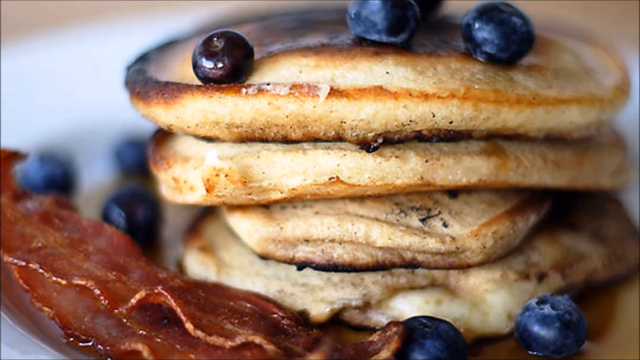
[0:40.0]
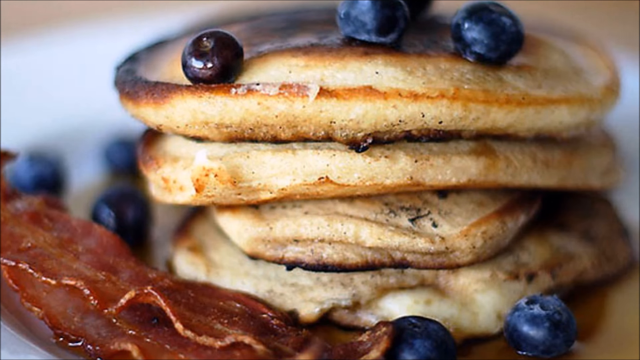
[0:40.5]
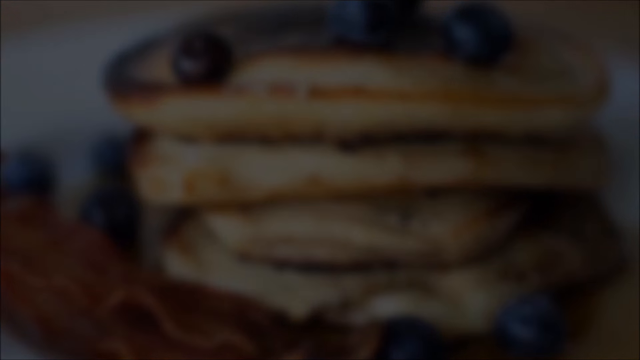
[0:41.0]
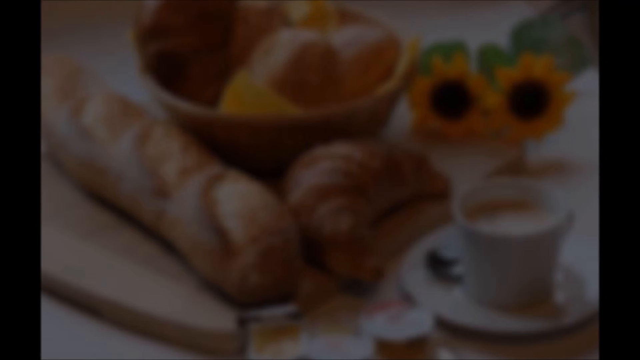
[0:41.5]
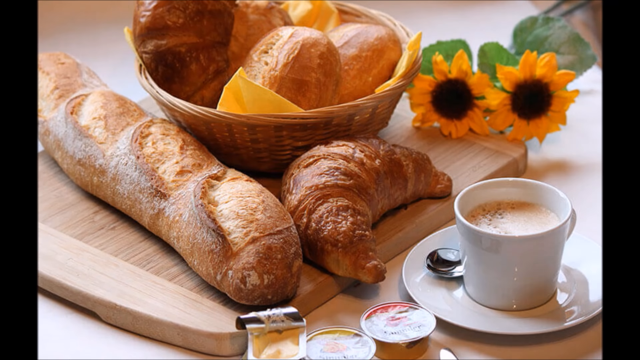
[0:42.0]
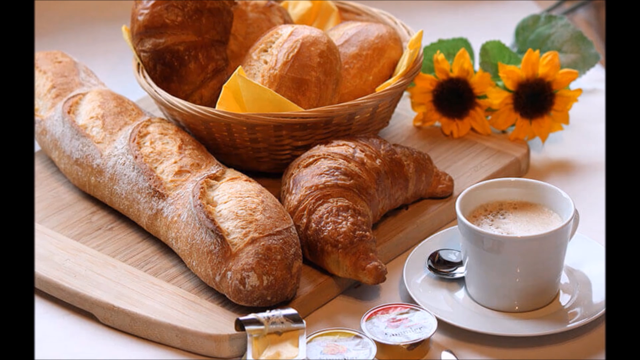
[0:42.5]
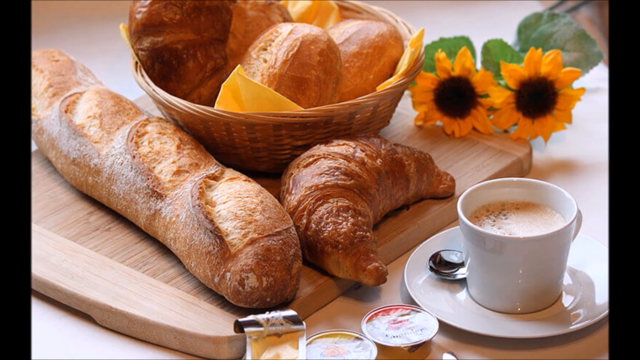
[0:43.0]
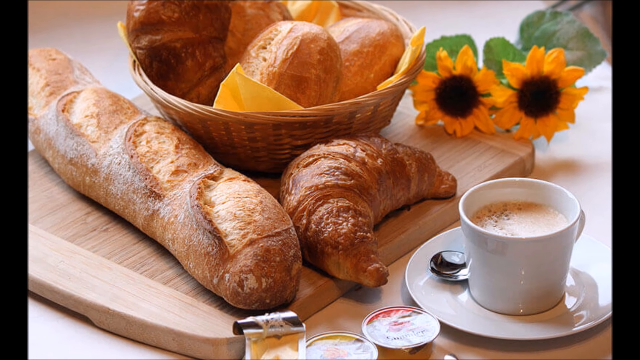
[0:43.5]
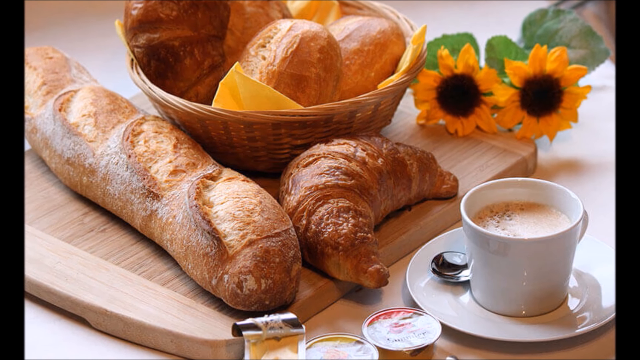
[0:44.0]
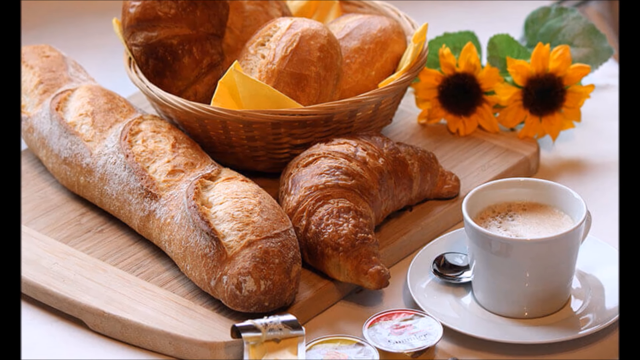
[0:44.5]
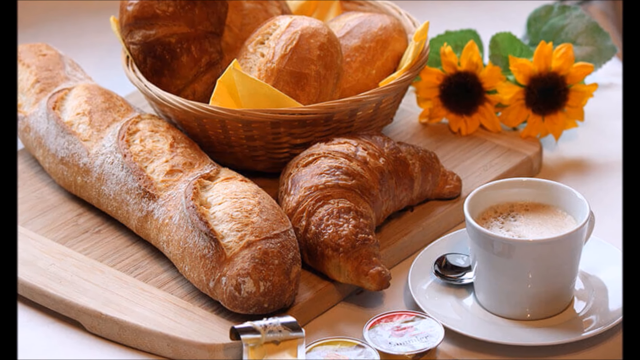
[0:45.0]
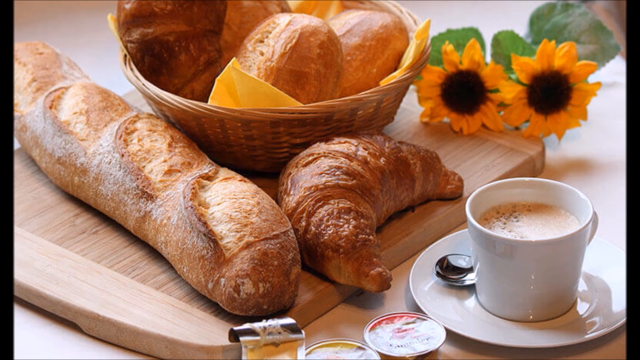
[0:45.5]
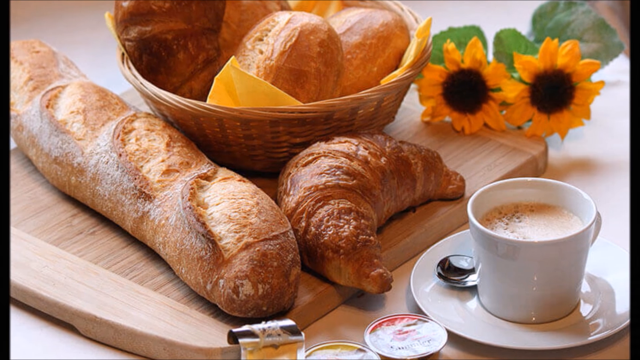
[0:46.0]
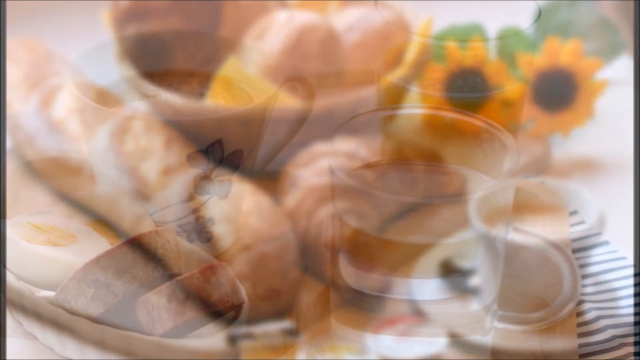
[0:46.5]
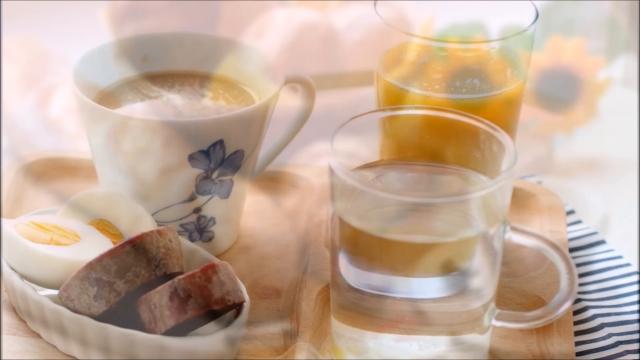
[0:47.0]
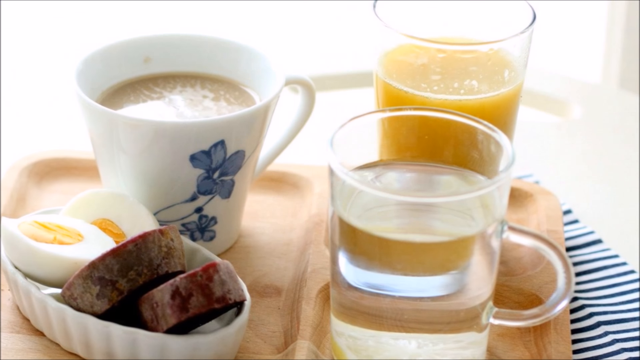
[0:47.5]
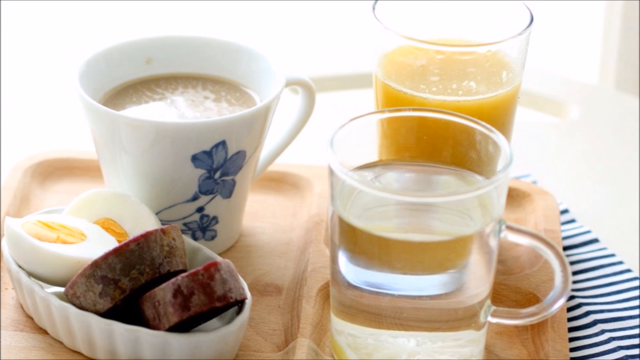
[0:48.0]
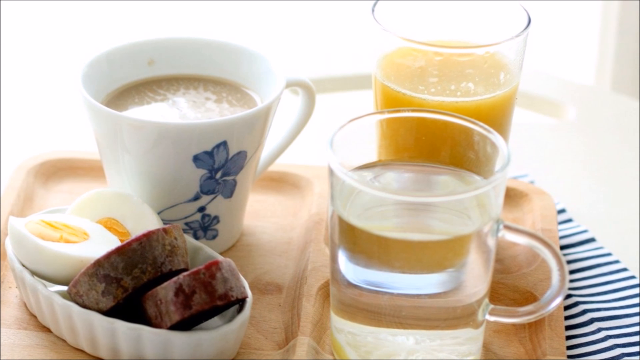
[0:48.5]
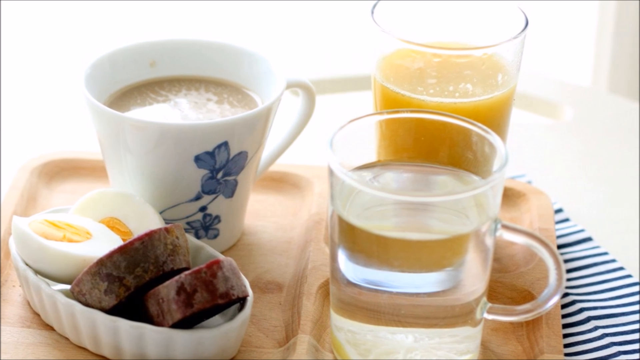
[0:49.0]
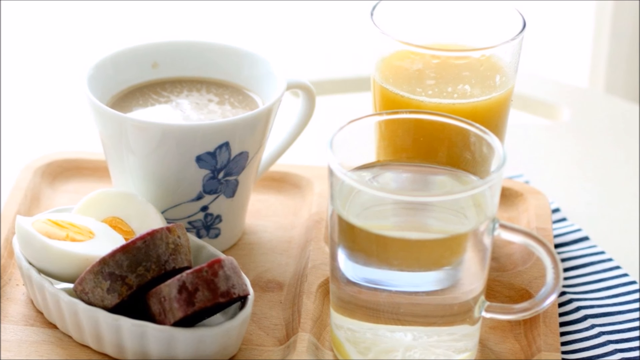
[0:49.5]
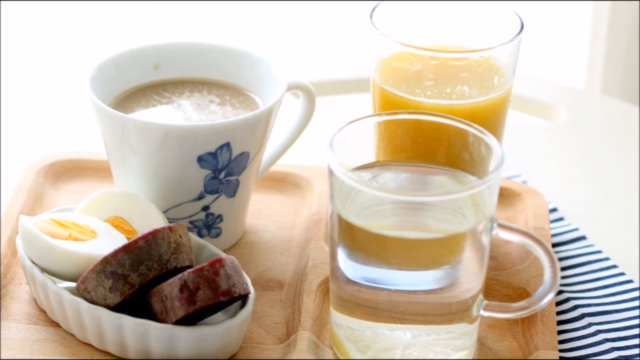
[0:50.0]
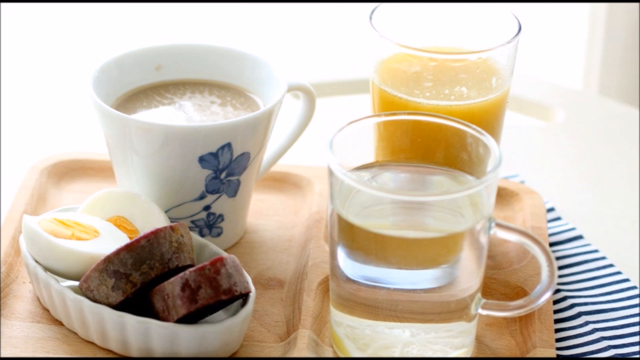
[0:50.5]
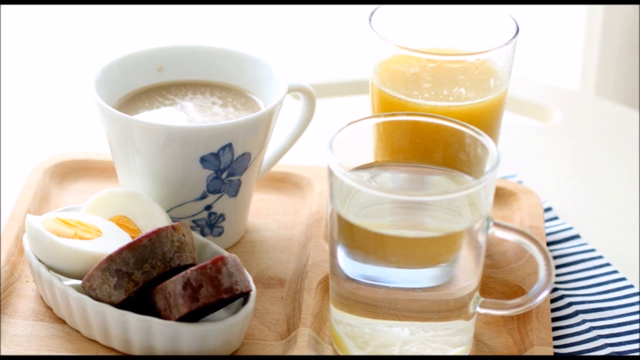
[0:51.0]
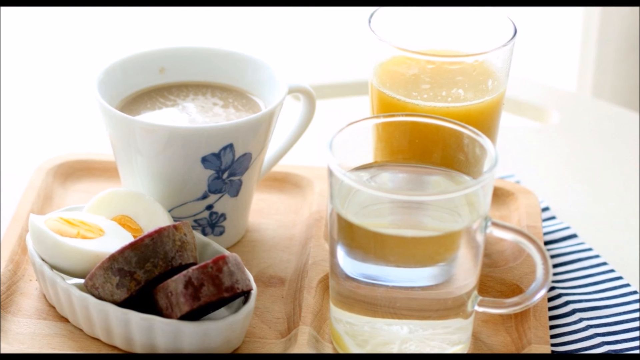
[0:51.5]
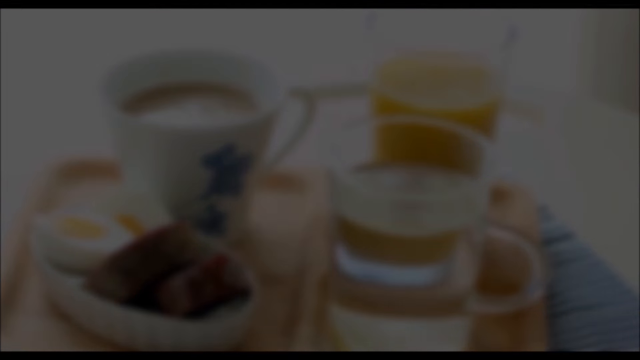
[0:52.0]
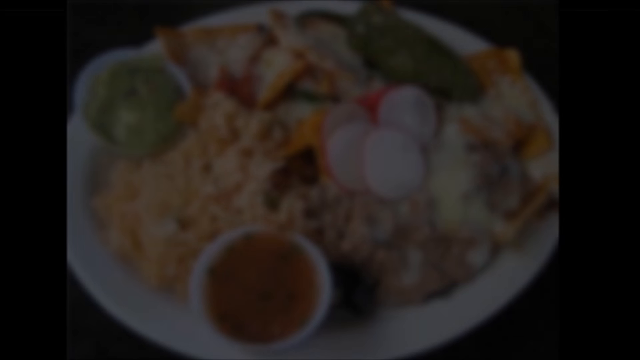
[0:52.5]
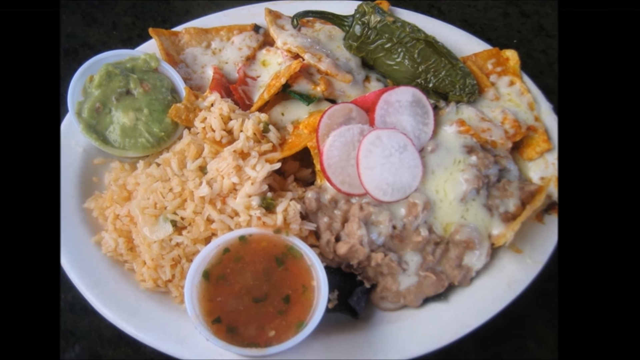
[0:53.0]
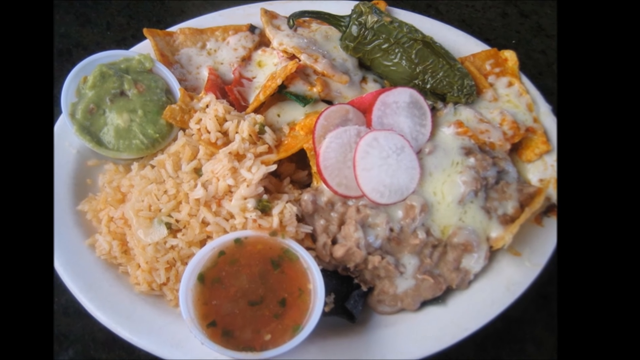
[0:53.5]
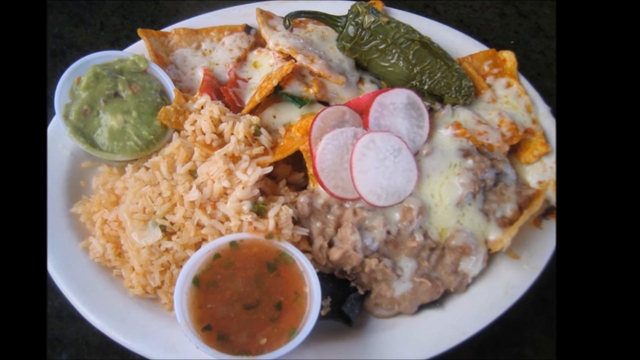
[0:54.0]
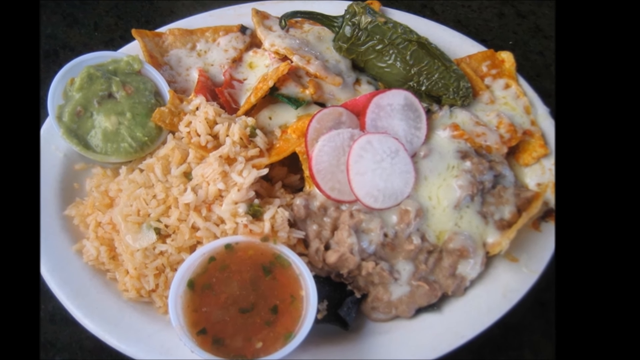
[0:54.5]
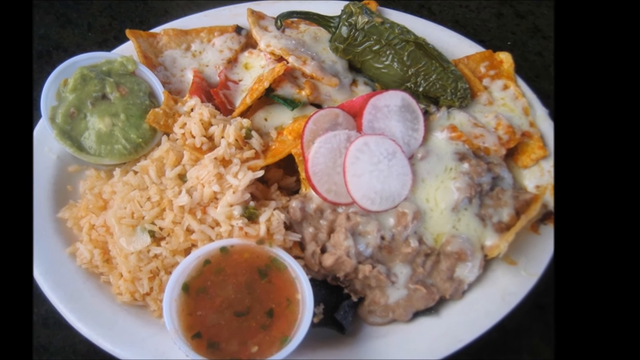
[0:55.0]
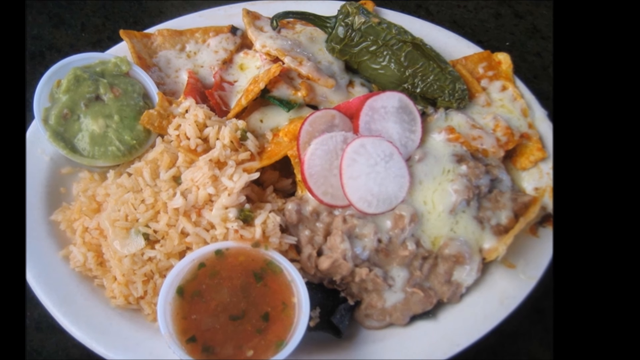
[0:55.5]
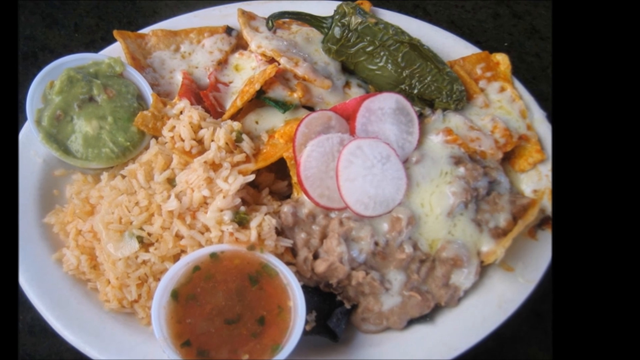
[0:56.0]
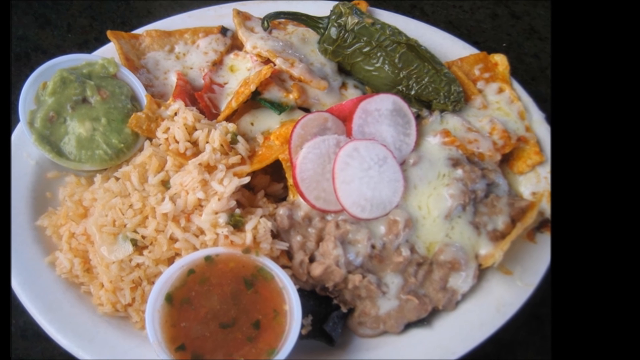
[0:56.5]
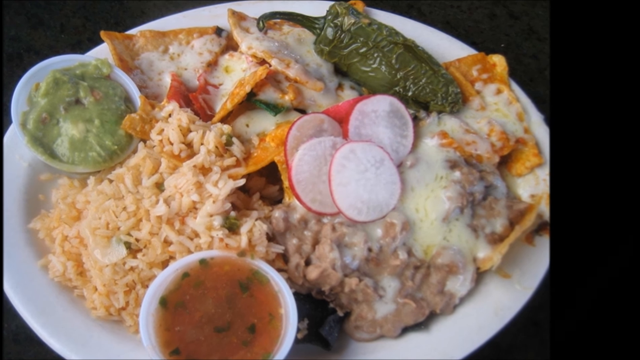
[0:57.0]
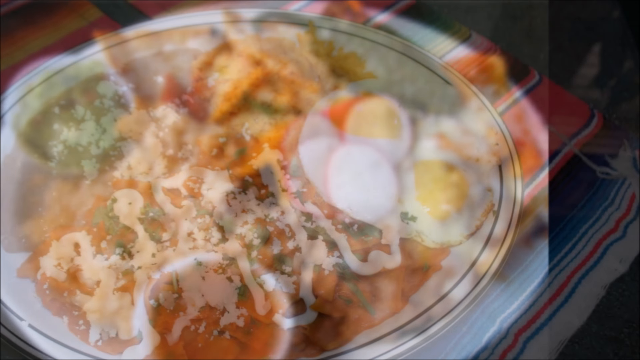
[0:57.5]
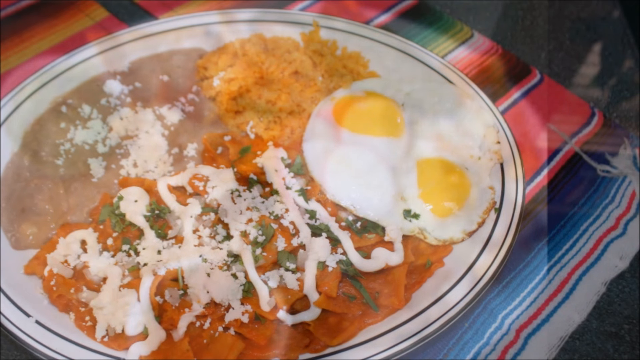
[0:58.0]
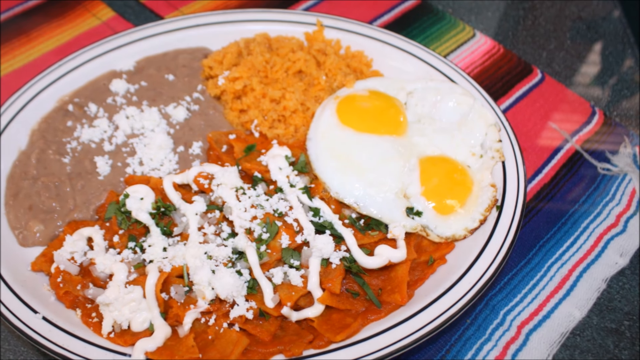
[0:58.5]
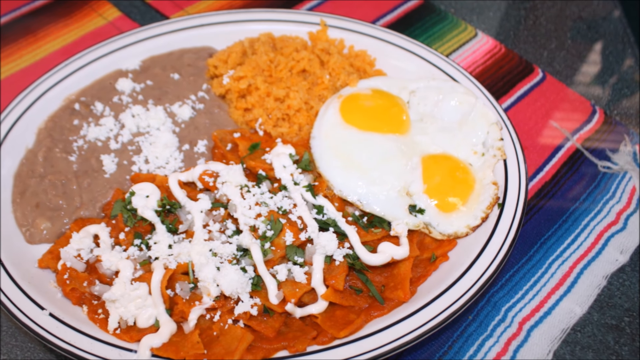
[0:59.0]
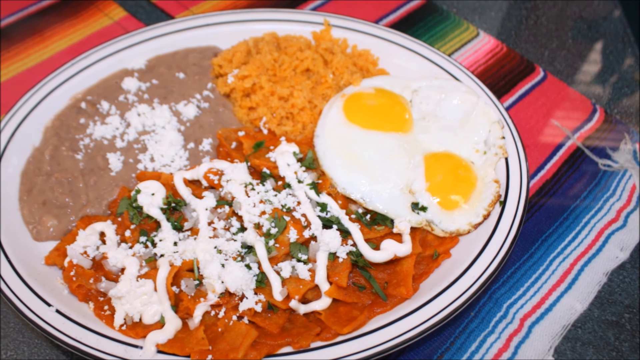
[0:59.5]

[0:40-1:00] A stack of four slightly thick pancakes with slightly burnt edges has blueberries scattered all over the top and sides, with two slices of bacon to the left. This fades to black and then to an image of a wooden breadboard with a baguette on the left side and a croissant to its right. Behind them is a basket filled with round loaves of bread, and behind the basket to the right are two sunflowers, just the flowers. At the bottom right is a cup of coffee in a white mug on a white saucer, with a spoon partially obscured behind it, and in front of that is a plate of dipping sauces, one of them partially opened on the left. The view zooms in on the croissant, then fades to an image of three glasses. The two on the right are transparent: the one at the bottom right has a thin handle and is filled with a clear liquid, and the one at the upper right is half full of orange juice. At the upper left is a white teacup with a blue floral print, filled with coffee. On the lower left is a ramekin with two slices of sausage and two slices of hard-boiled egg. All of this is on a cardboard serving tray on top of a blue and white striped glass. This fades to black and shows another breakfast with rice, radishes, tortilla chips and peppers. The view zooms in on the pepper and then cuts to an image of huevos rancheros.